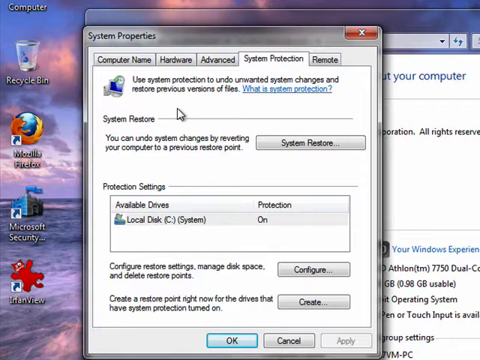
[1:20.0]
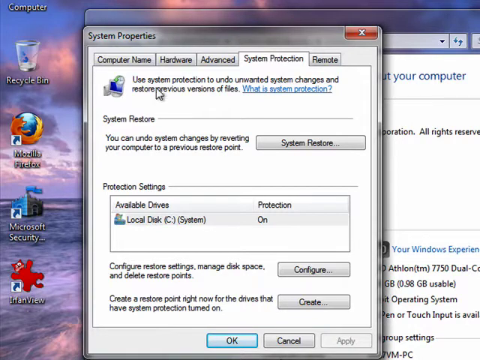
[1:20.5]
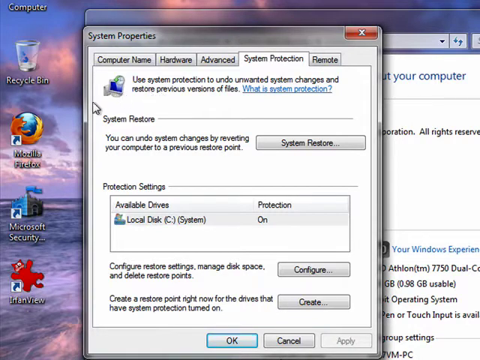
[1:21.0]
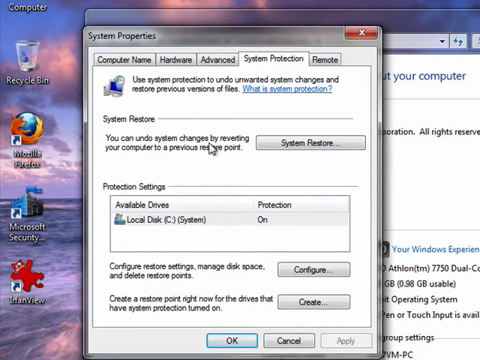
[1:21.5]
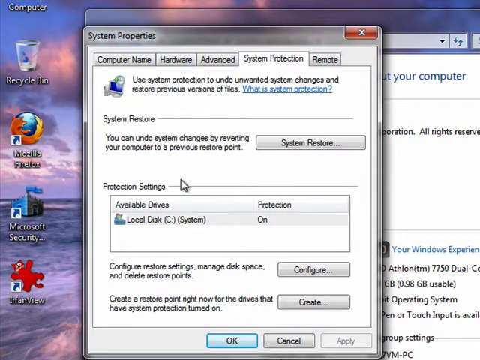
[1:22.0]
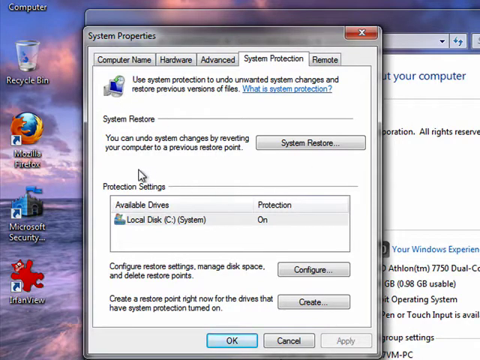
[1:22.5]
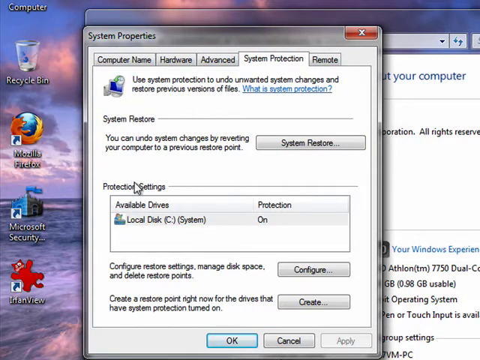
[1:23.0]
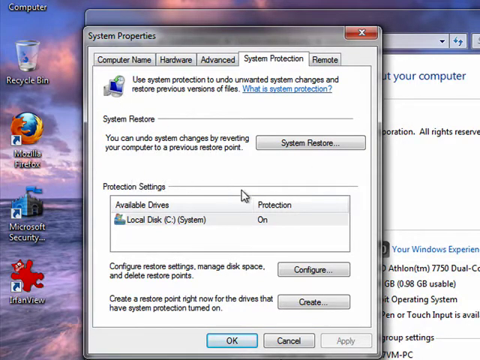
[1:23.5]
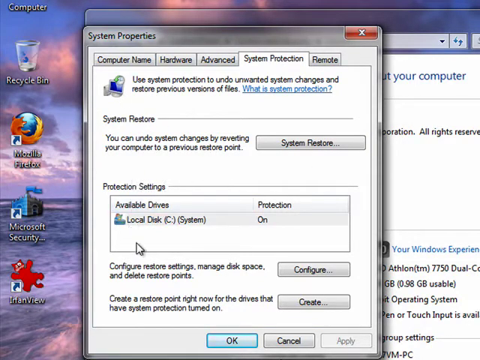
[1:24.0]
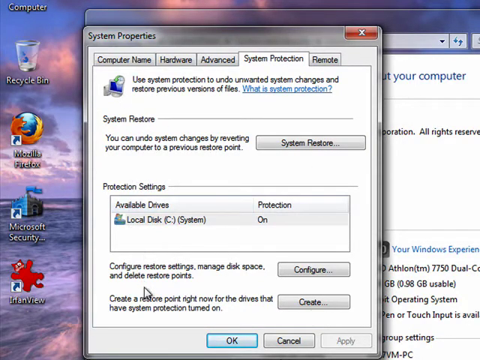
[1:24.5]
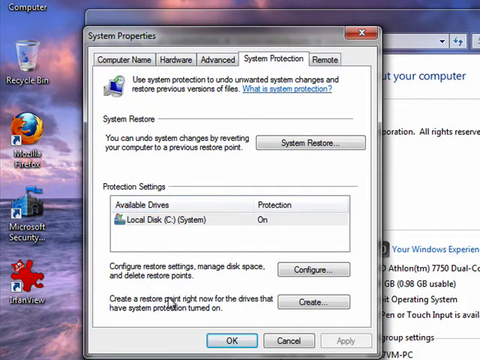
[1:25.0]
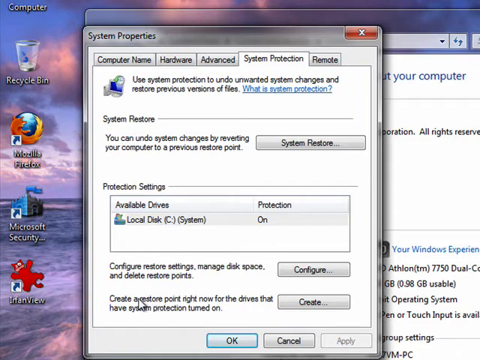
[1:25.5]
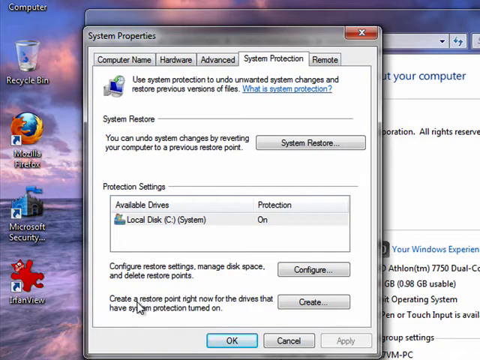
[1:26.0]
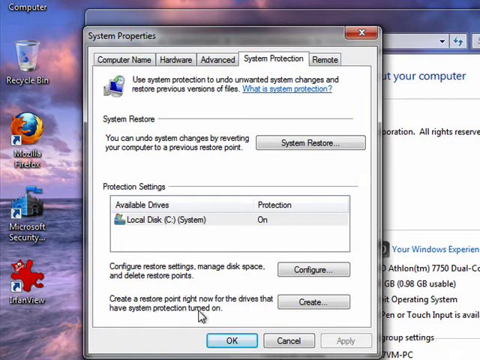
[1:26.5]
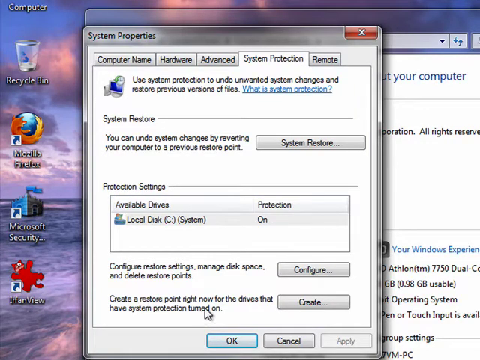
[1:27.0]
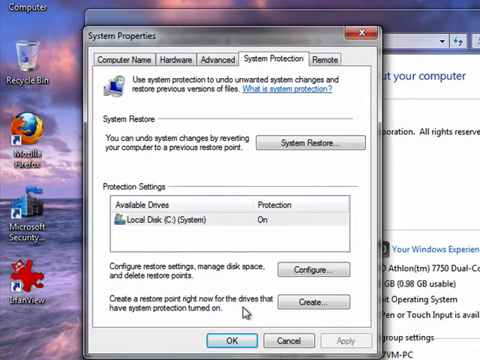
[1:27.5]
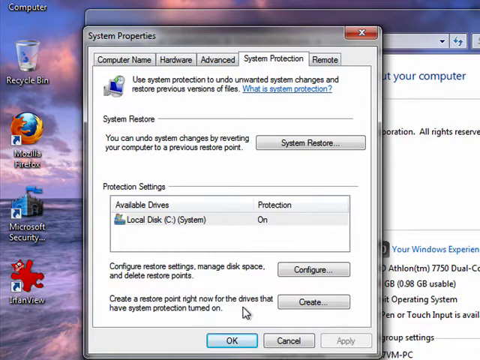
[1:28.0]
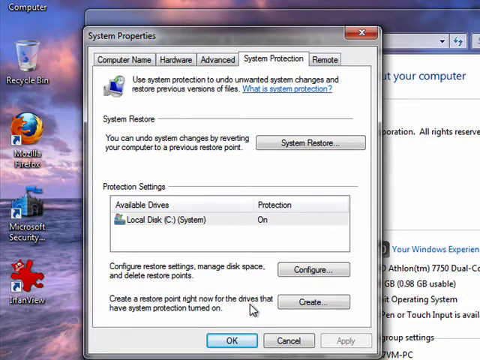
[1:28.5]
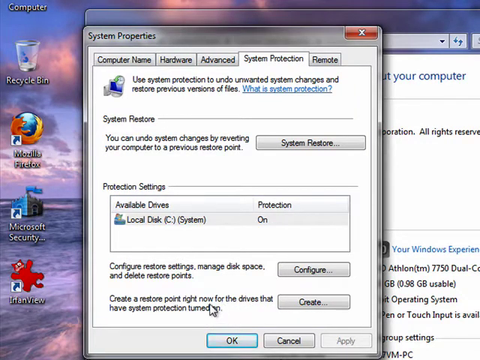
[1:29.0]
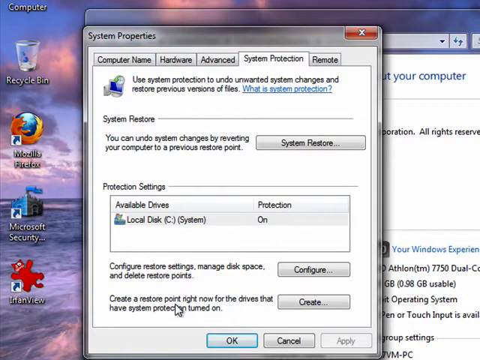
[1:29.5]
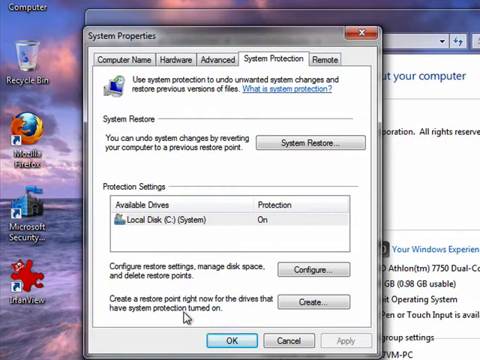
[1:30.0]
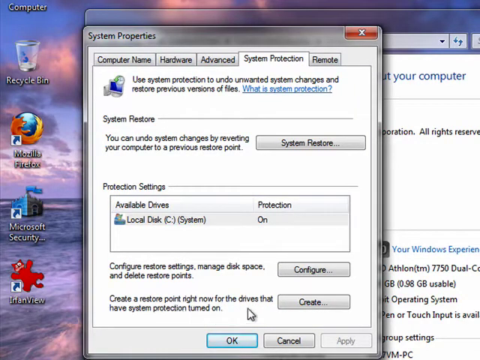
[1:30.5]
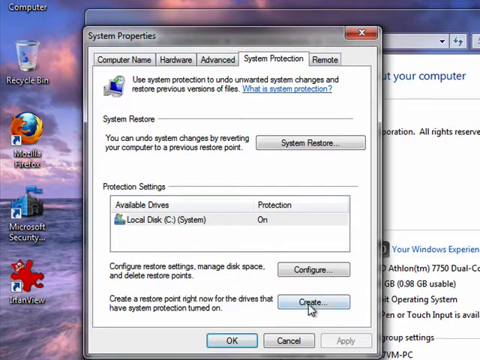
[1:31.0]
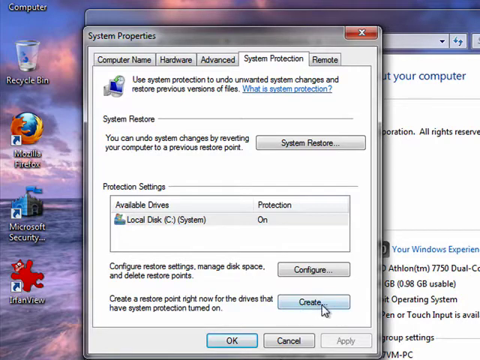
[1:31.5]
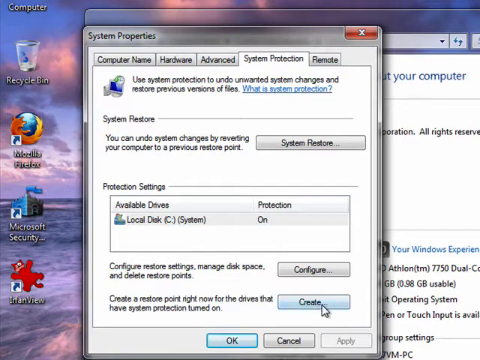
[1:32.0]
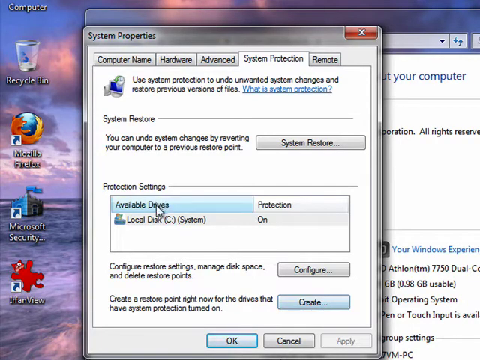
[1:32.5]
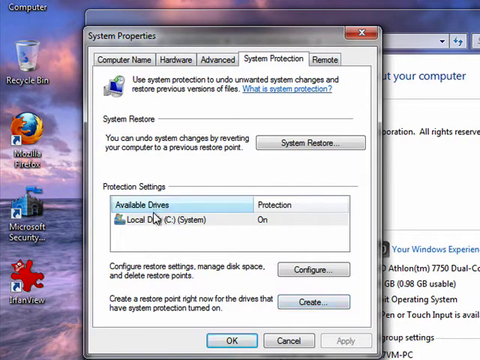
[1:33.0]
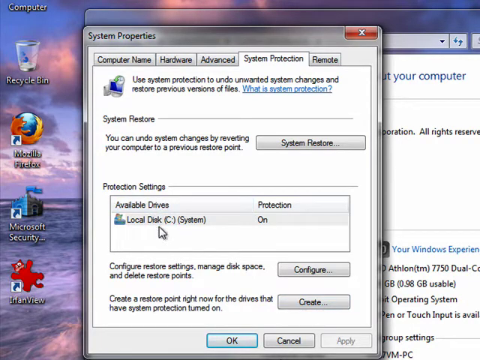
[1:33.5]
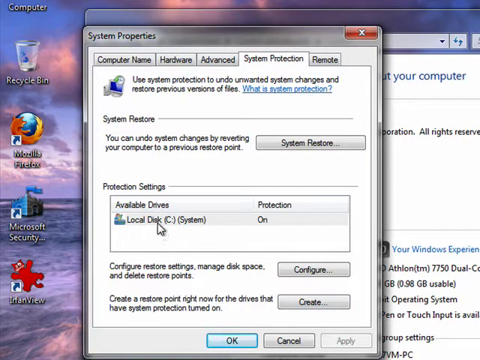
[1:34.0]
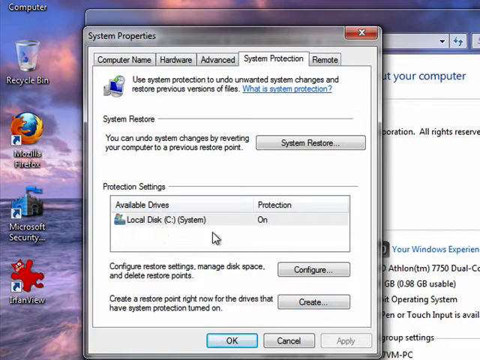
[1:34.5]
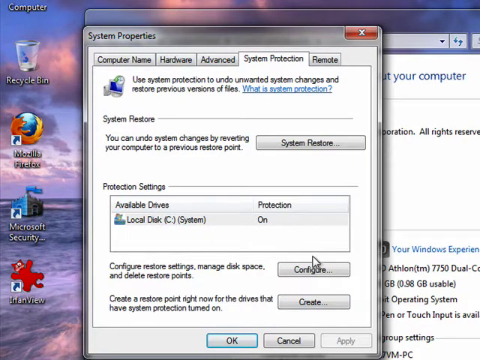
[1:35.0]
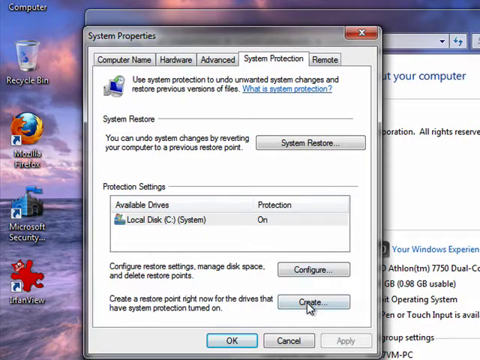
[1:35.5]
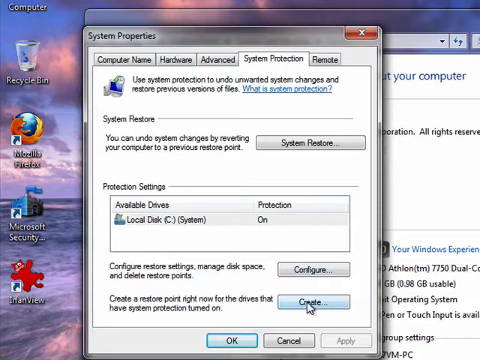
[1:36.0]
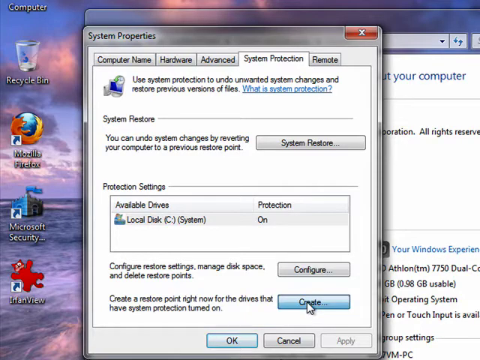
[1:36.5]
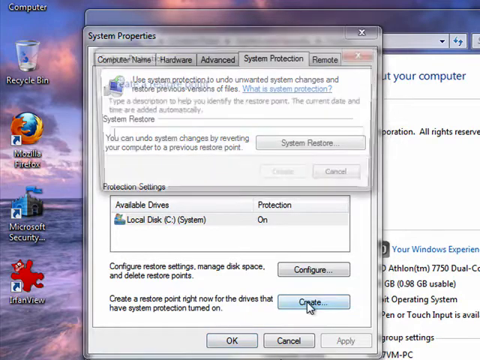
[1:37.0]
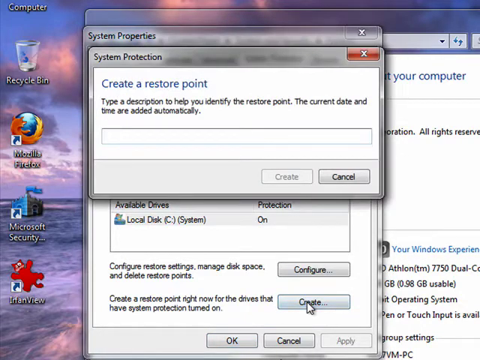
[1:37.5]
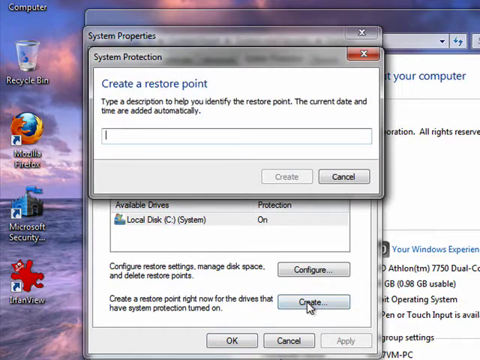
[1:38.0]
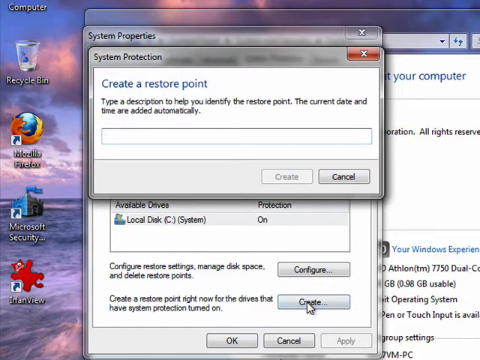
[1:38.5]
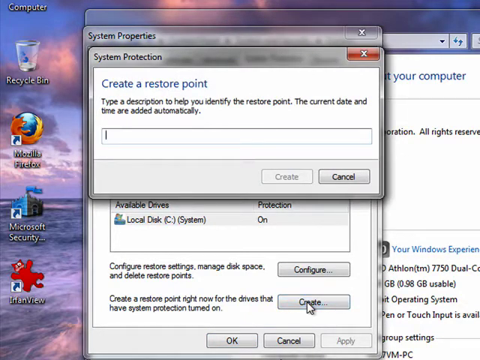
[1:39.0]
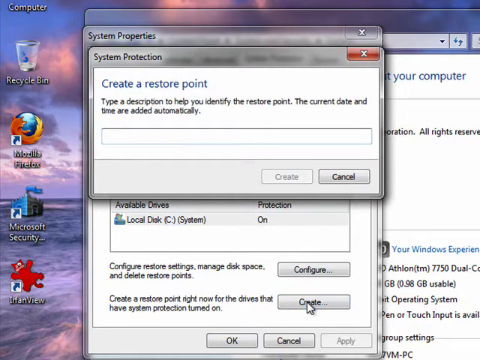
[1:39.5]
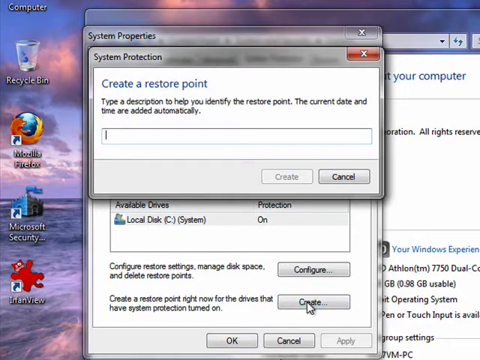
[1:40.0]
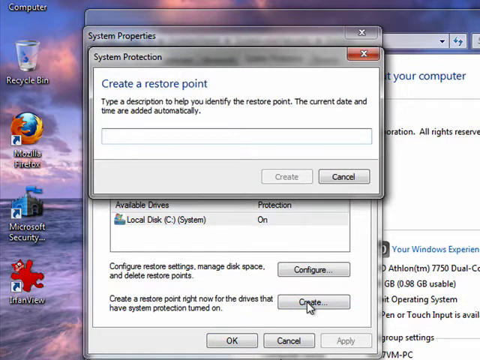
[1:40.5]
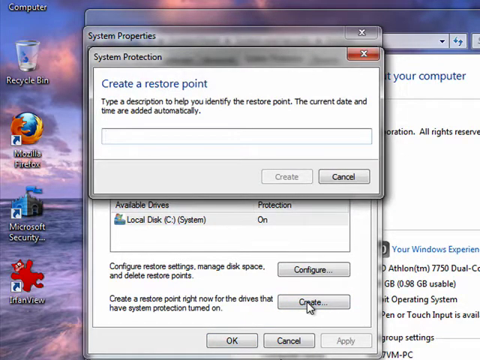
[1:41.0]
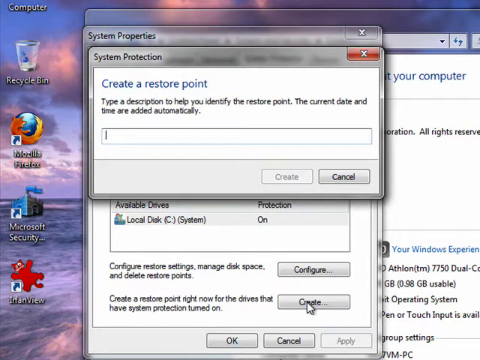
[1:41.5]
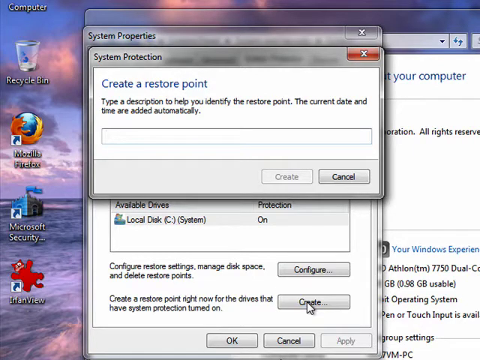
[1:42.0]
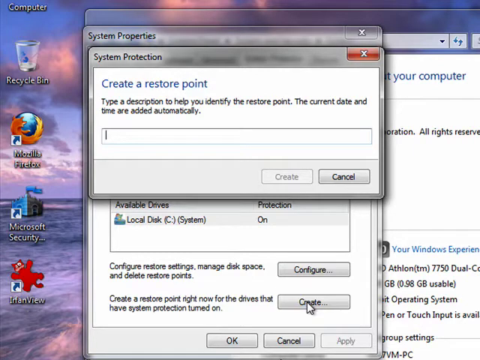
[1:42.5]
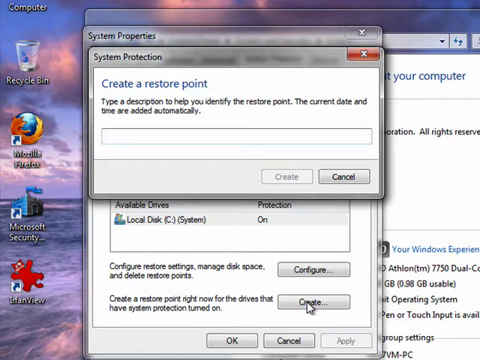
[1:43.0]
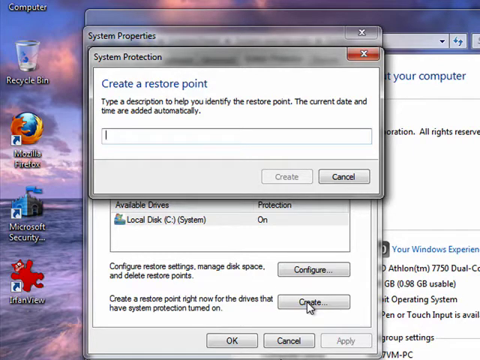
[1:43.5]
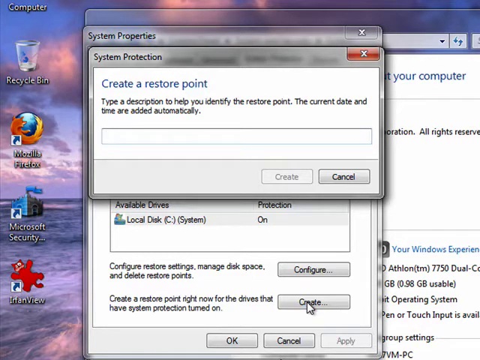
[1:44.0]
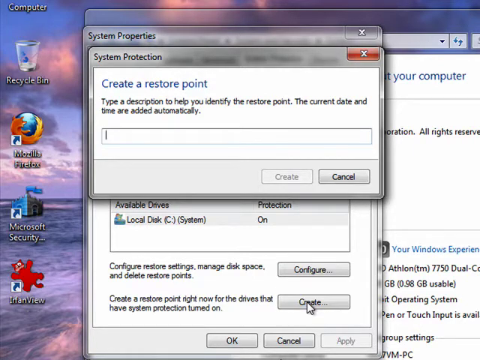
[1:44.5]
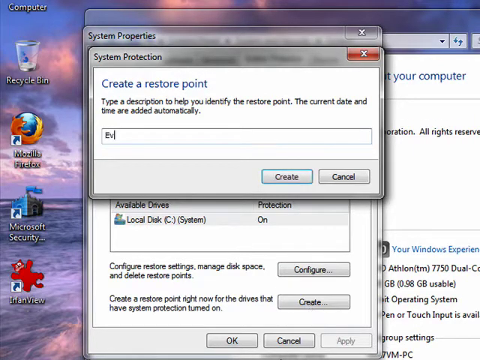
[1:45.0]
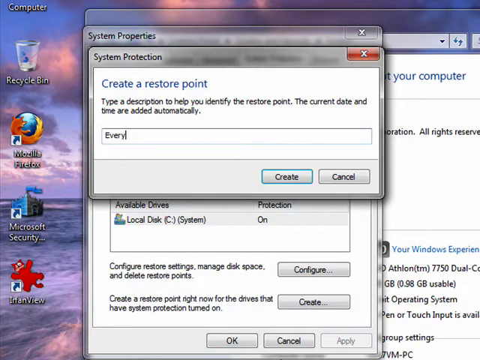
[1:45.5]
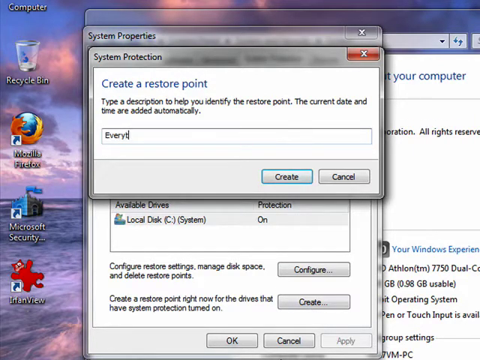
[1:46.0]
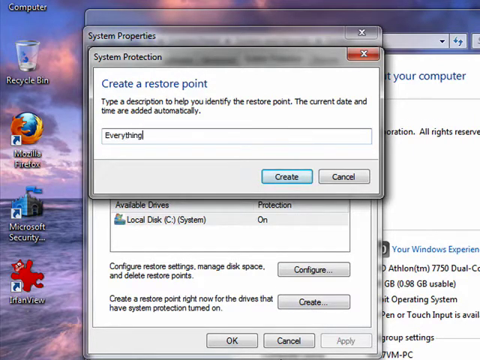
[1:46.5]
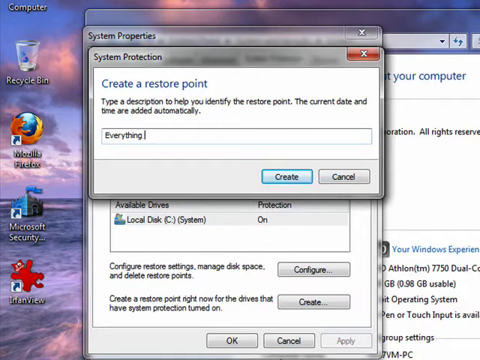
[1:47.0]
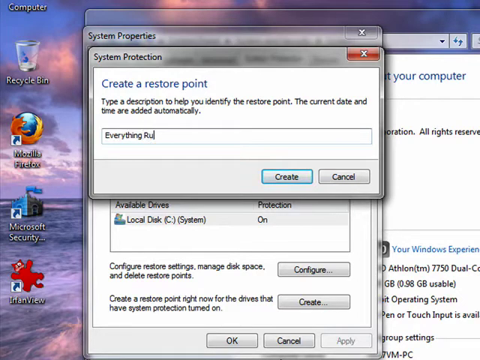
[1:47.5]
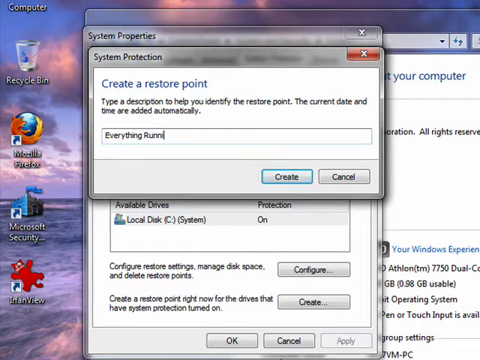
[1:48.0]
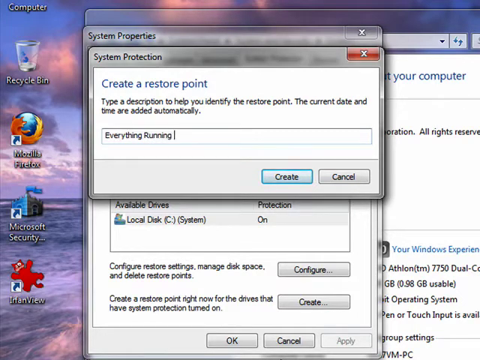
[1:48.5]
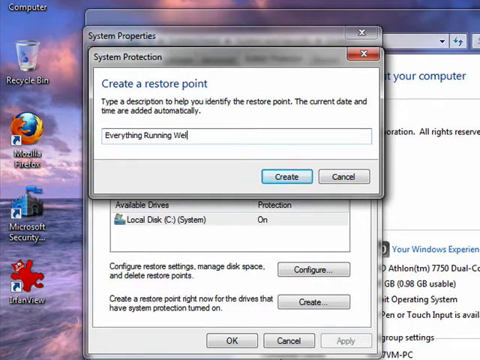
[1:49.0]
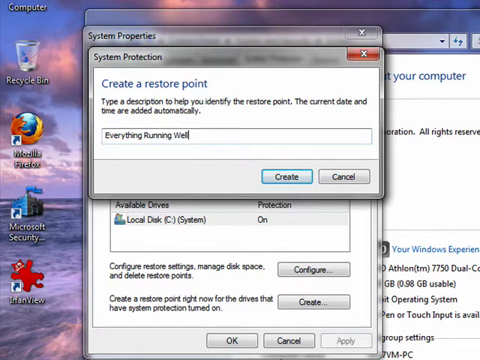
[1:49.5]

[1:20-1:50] A list of devices and disk drives is shown, along with an option that says "create a restore point right now for the drives that have system protection turned on." The person hovers the mouse over the text that says "create a restore point," and when the mouse is over the Create button, the button turns from gray to a bluish color, highlighting it.